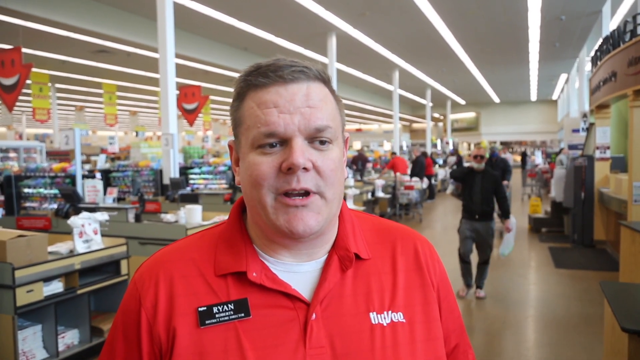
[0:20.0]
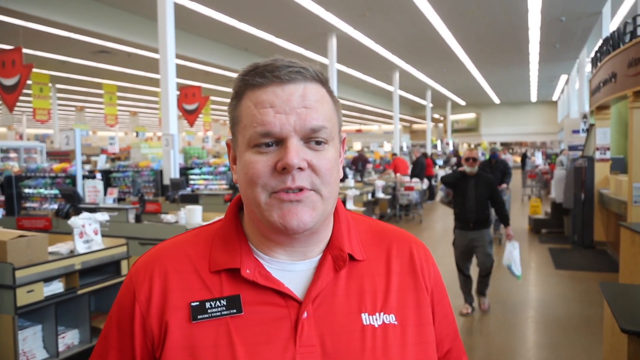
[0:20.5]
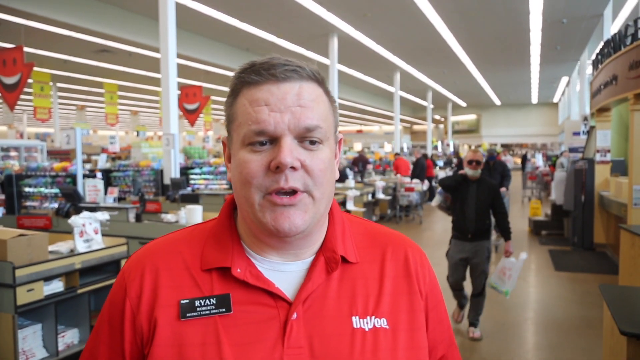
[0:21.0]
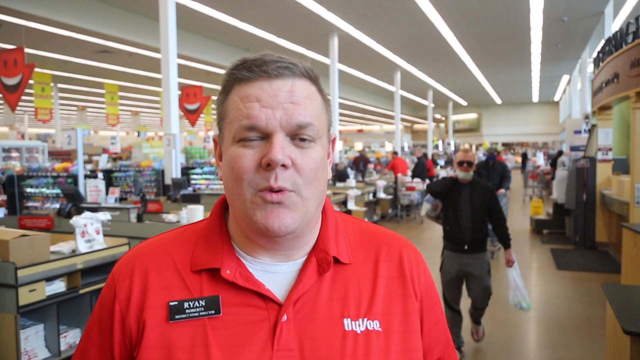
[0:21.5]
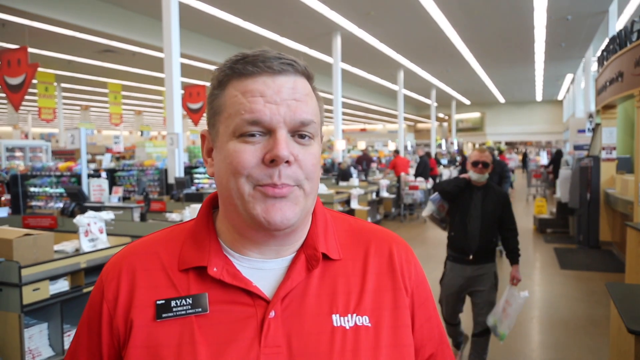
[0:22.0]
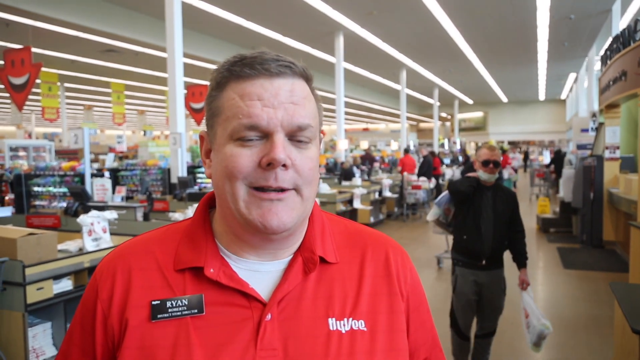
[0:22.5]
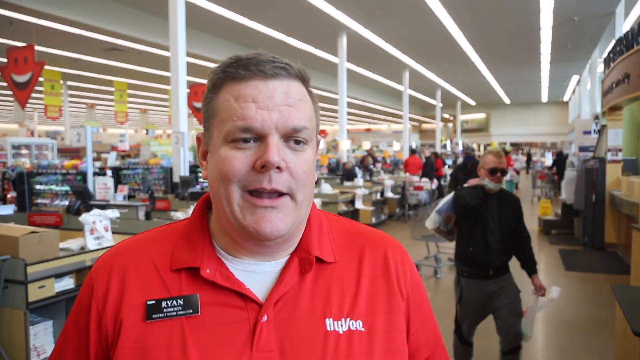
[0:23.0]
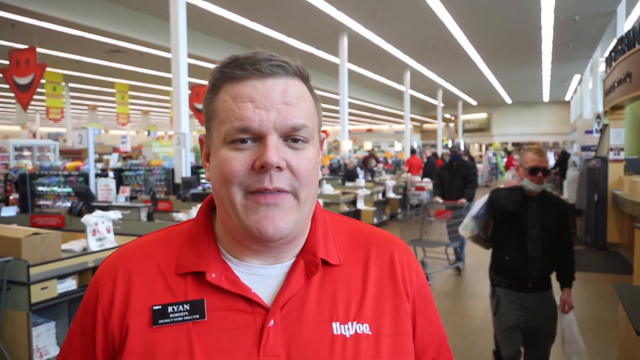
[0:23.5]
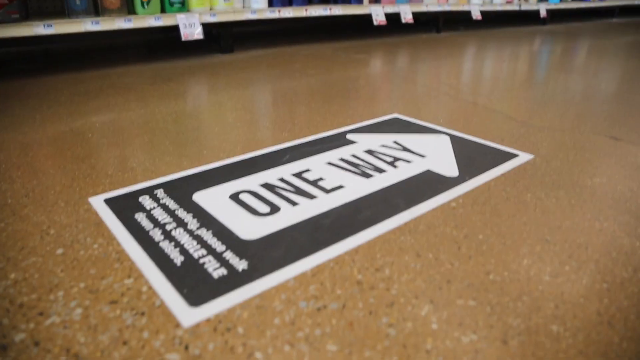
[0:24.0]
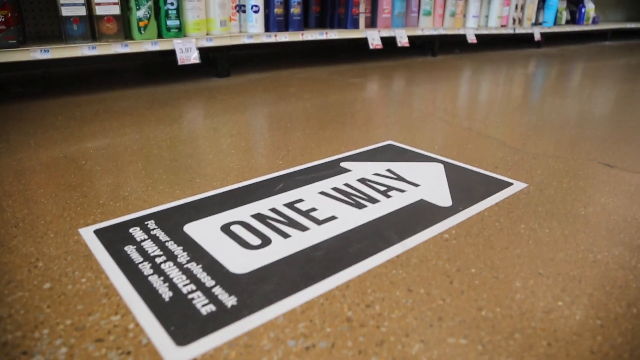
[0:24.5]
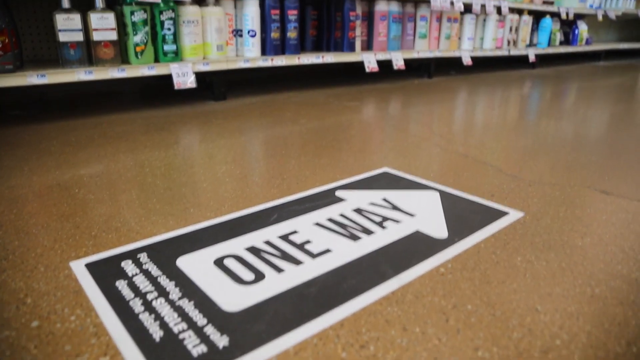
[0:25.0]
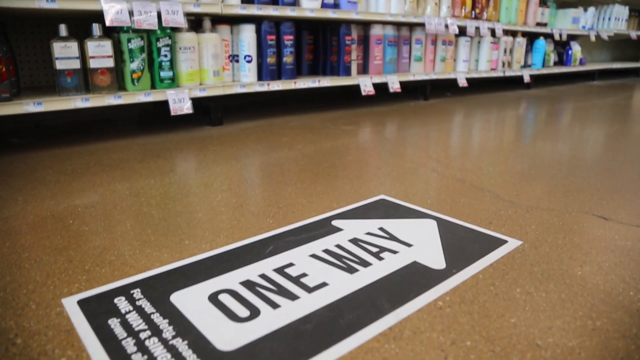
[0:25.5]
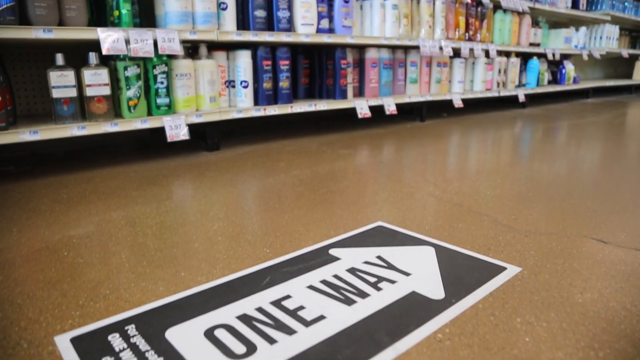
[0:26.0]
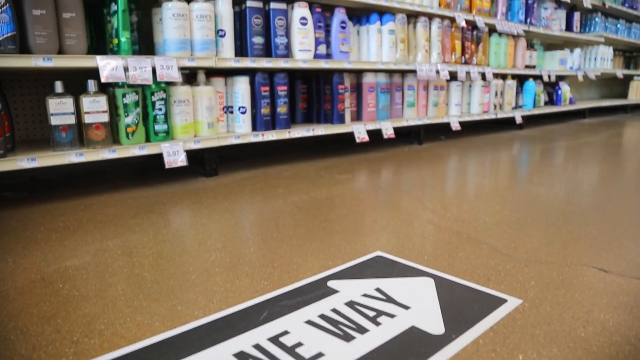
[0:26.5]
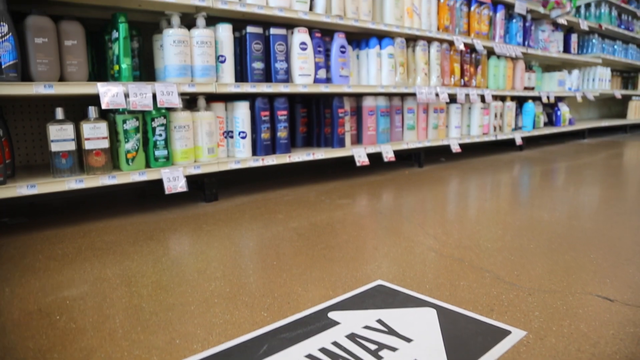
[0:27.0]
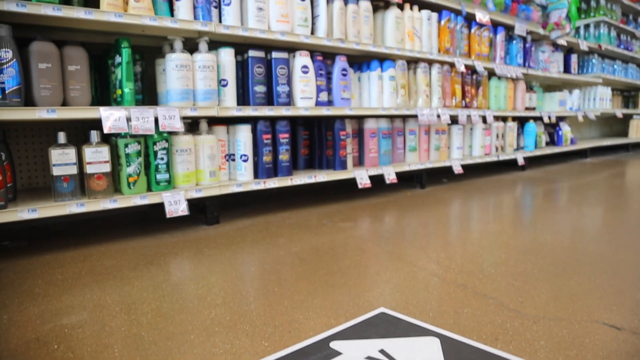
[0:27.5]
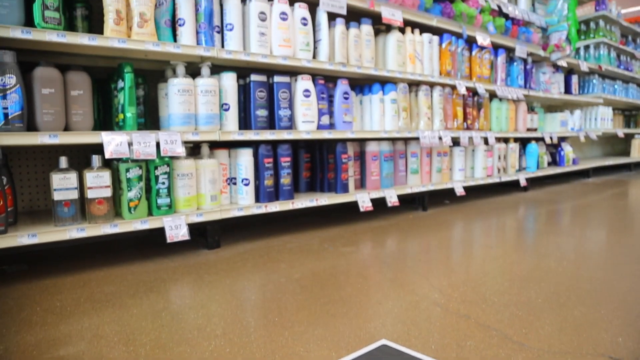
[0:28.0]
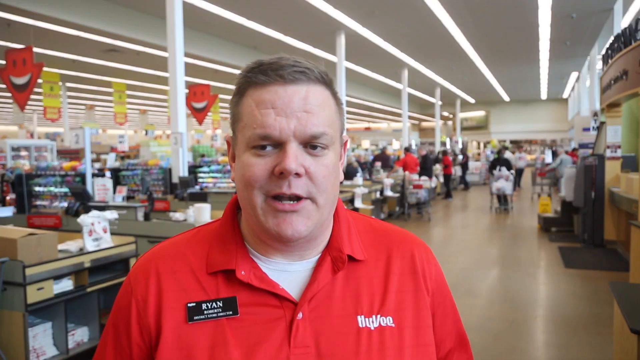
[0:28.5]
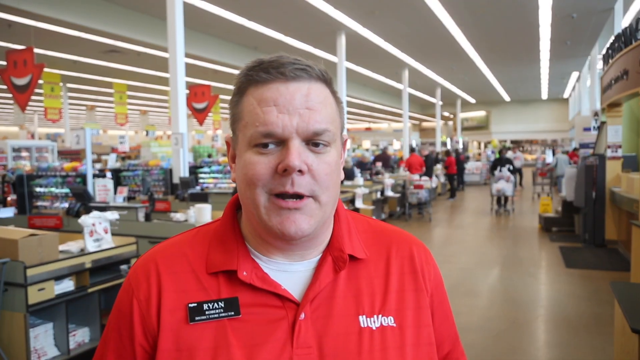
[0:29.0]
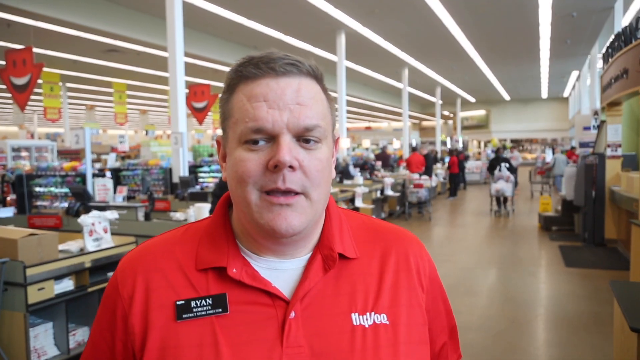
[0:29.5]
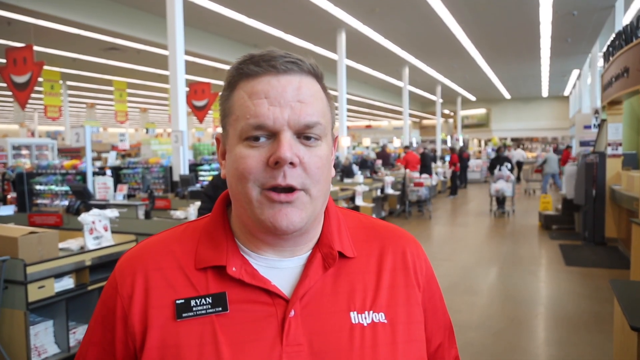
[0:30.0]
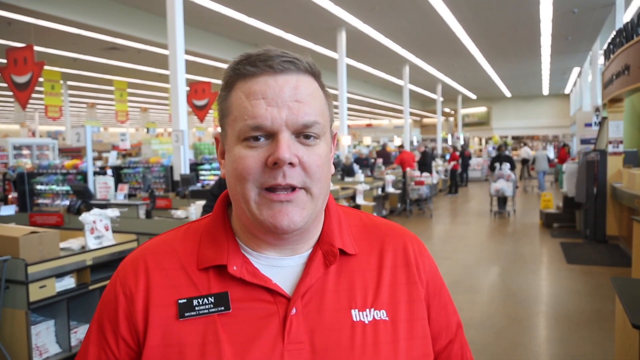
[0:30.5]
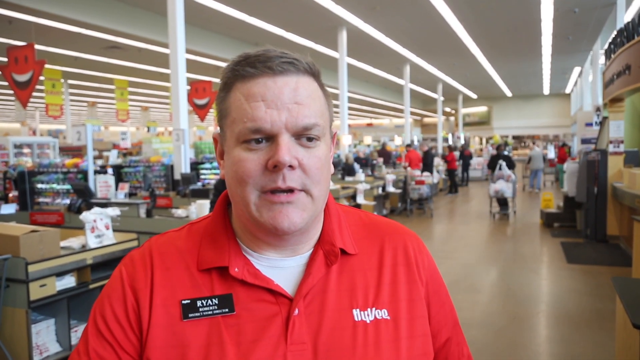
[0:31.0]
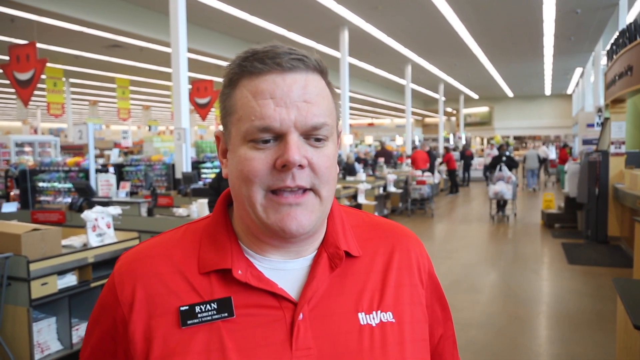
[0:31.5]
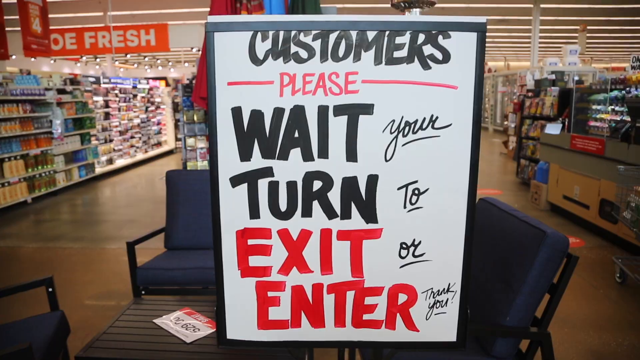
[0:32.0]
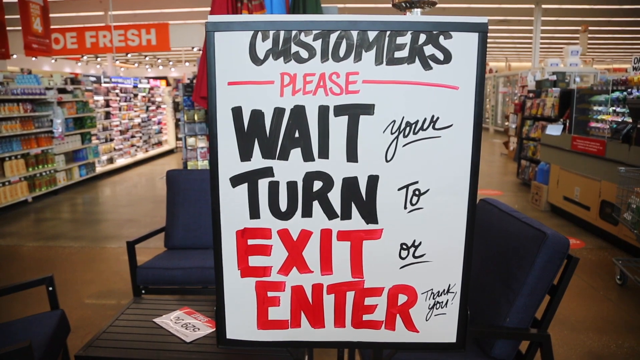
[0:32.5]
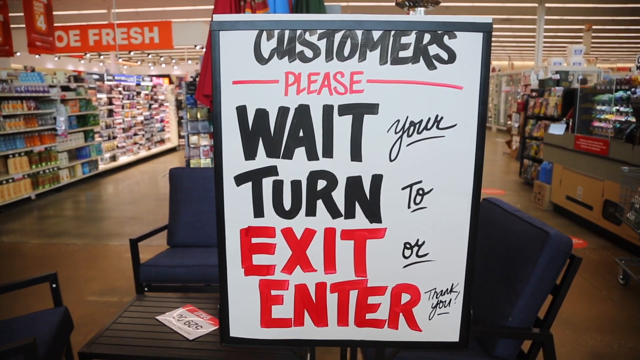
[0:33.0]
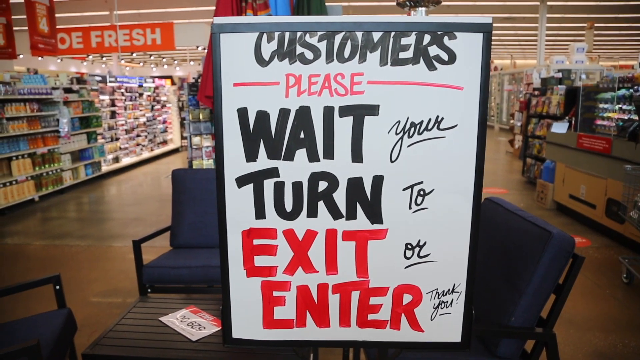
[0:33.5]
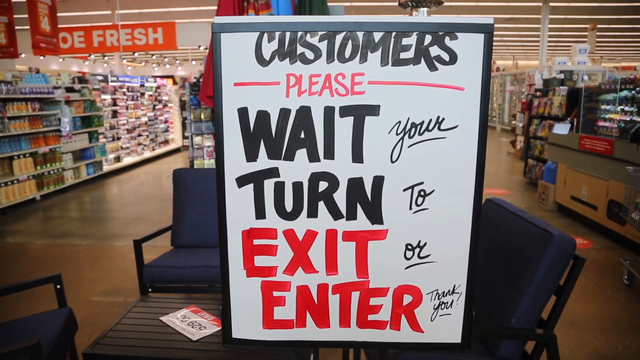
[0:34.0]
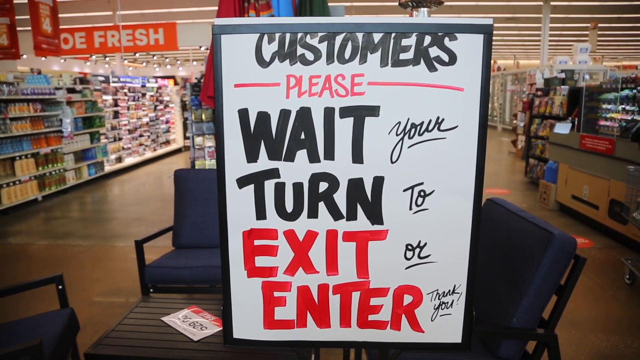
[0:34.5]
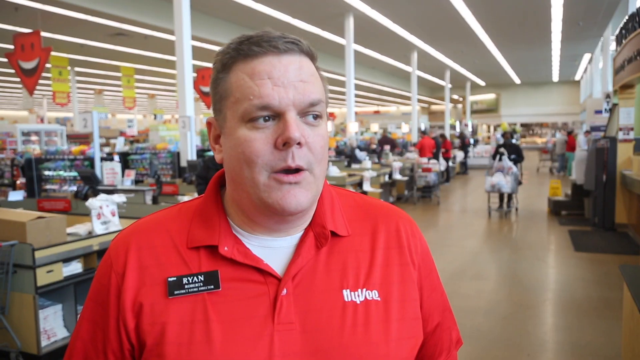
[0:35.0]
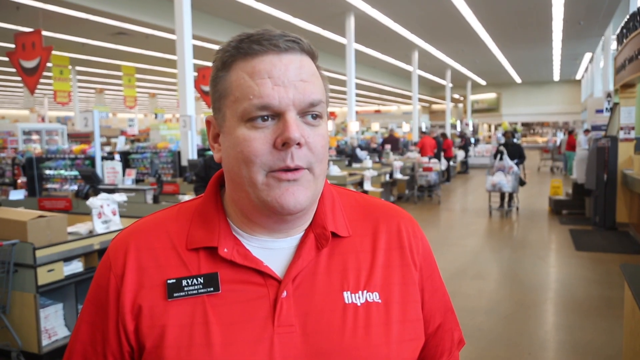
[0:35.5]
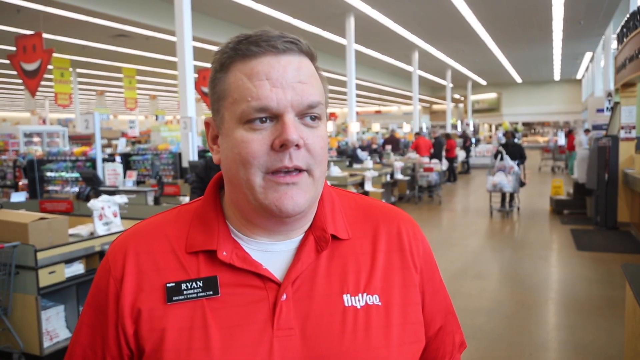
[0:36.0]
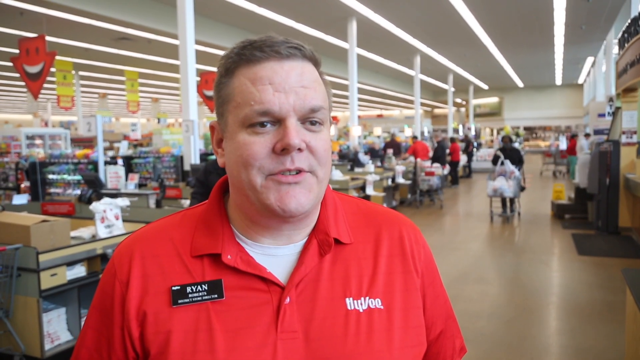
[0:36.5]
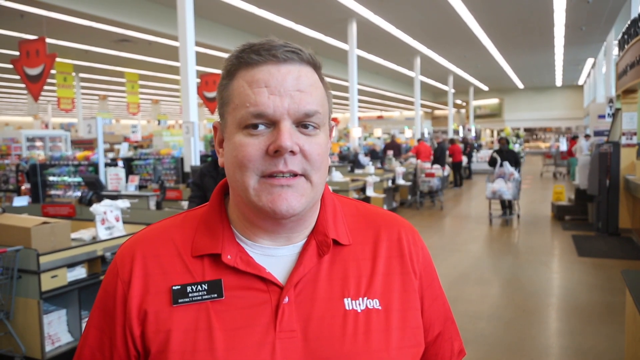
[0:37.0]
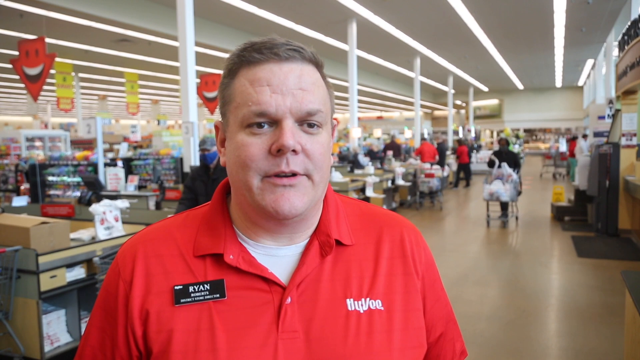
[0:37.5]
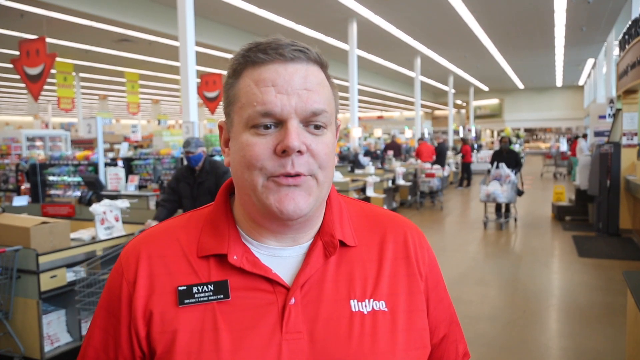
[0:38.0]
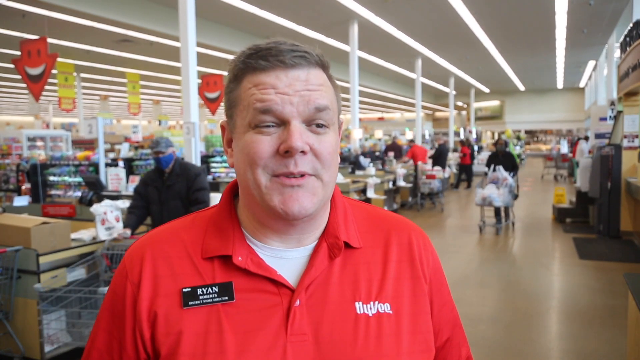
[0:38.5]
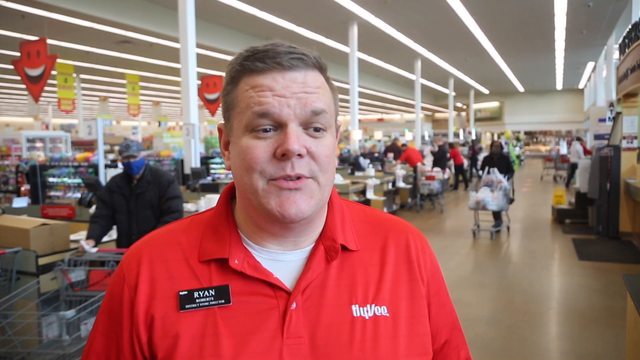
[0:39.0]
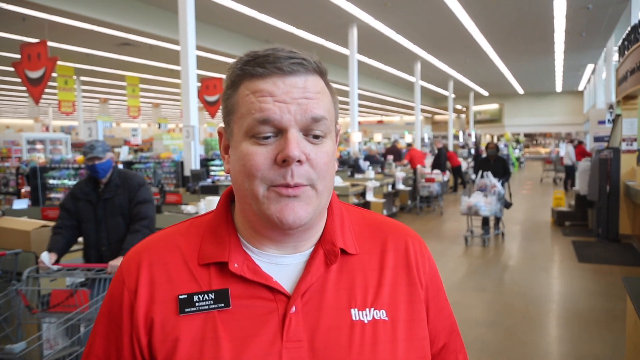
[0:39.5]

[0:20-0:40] Ryan Roberts continues talking in a zoomed-in, chest-up shot in front of many different checkout lines. A couple of people seem to pass or get closer to him as he talks; one man, with his mask kind of down on his chin, kind of avoids the camera. The video then shows a bottom-up view of what appears to be a shampoo aisle, with a sign pasted on the floor that says "one way" and an arrow facing right, as if going down the aisle. As the video zooms up, it transitions back to Ryan speaking in front of the checkout aisle. Another picture then shows the words "customers please wait your turn to exit or enter thank you" written in black and red Expo marker, after which Ryan talks for the rest of the segment.